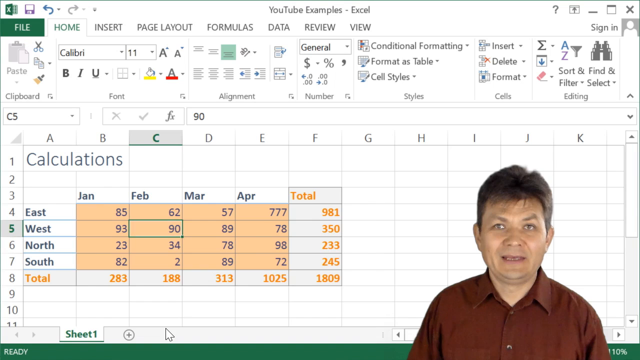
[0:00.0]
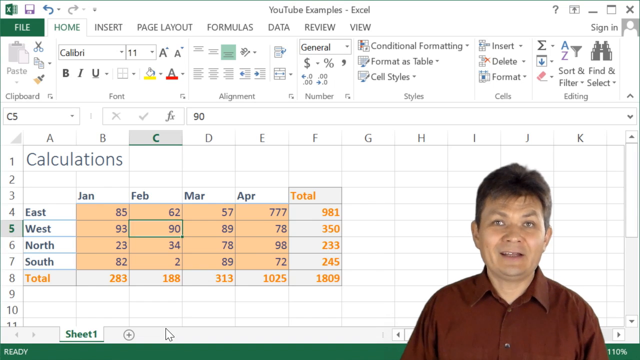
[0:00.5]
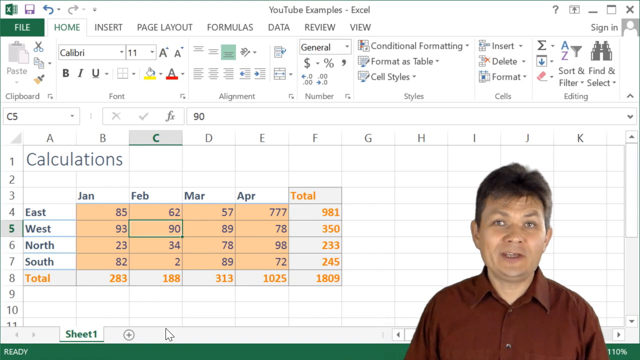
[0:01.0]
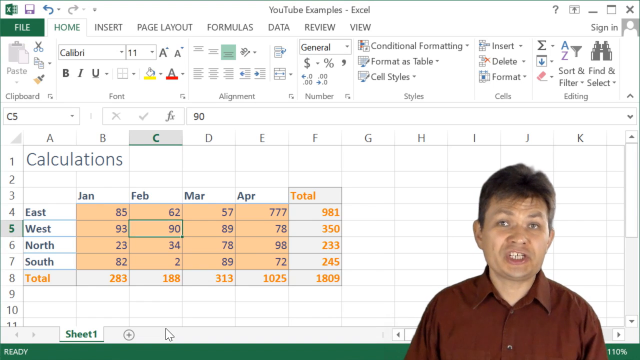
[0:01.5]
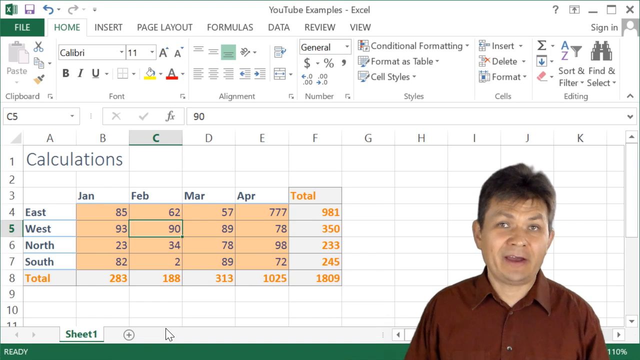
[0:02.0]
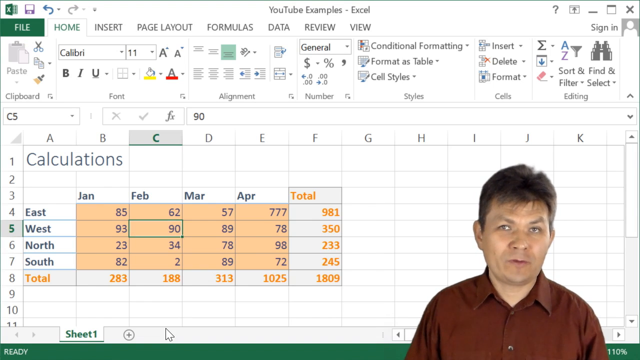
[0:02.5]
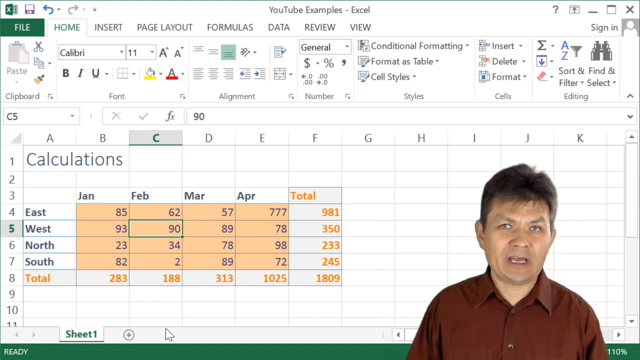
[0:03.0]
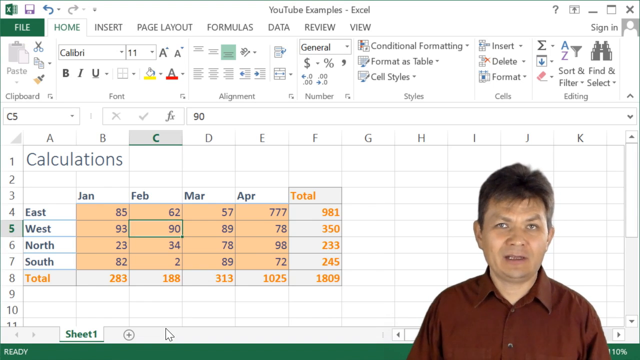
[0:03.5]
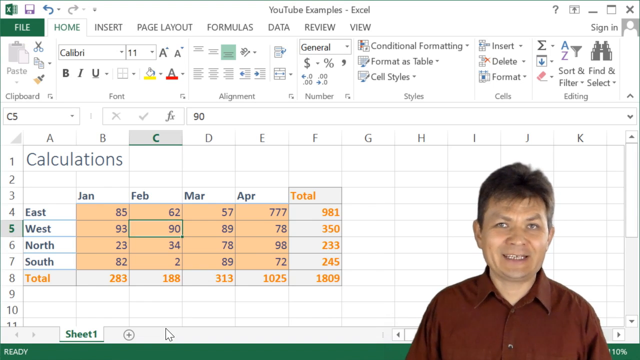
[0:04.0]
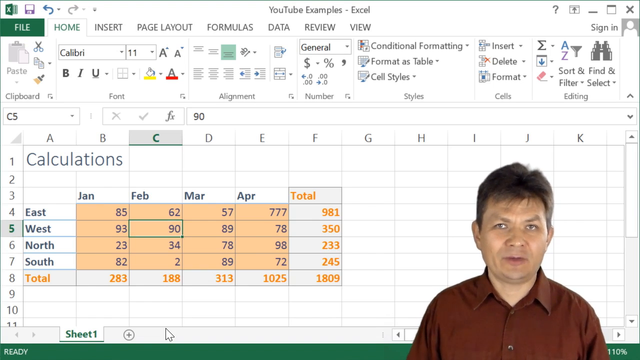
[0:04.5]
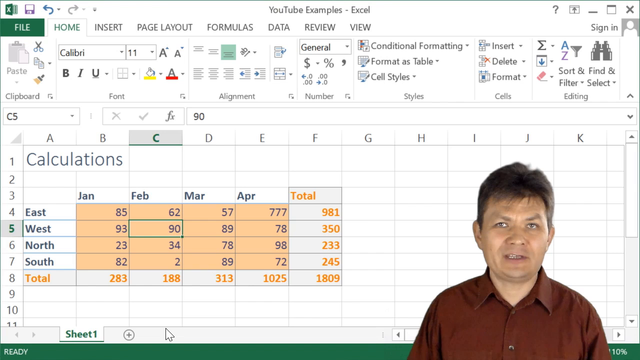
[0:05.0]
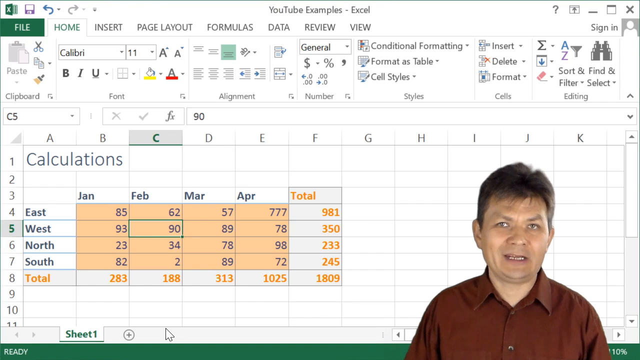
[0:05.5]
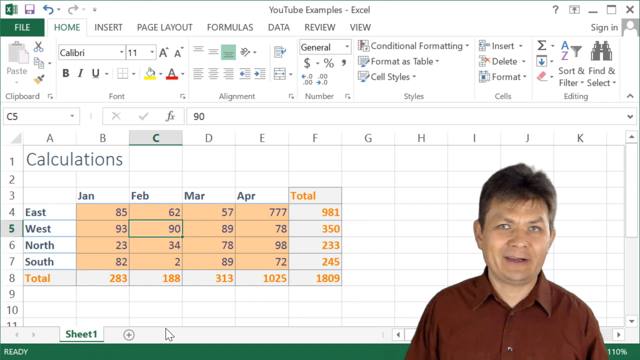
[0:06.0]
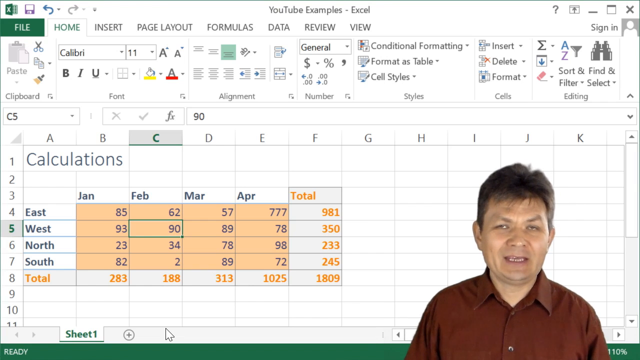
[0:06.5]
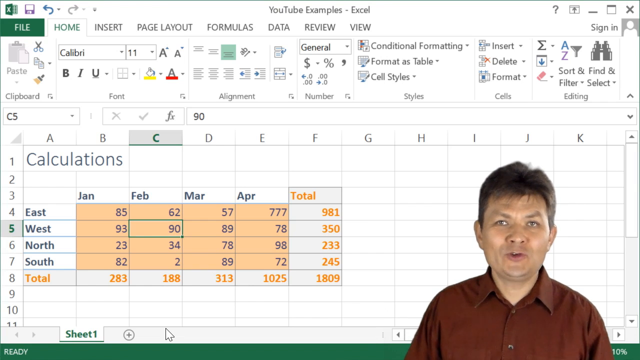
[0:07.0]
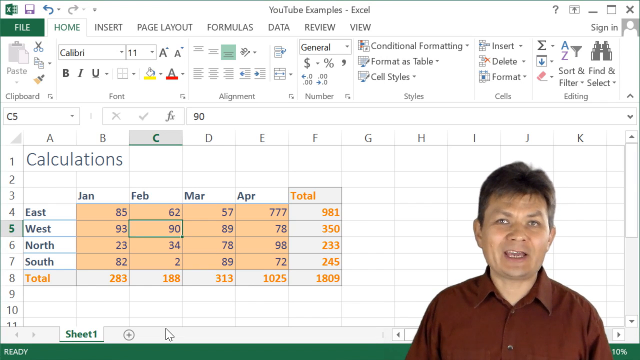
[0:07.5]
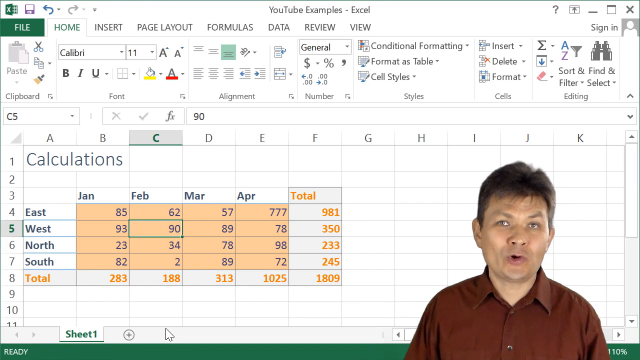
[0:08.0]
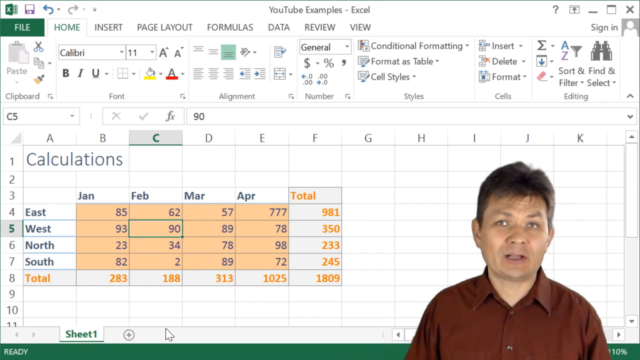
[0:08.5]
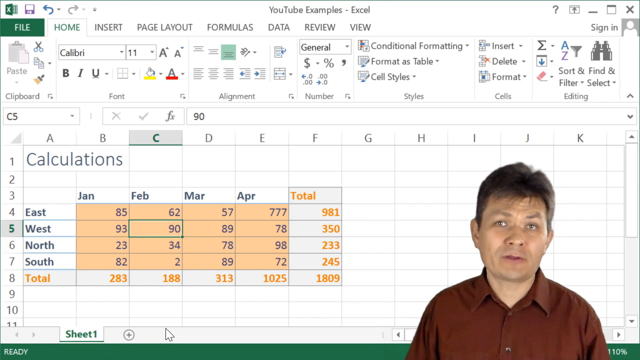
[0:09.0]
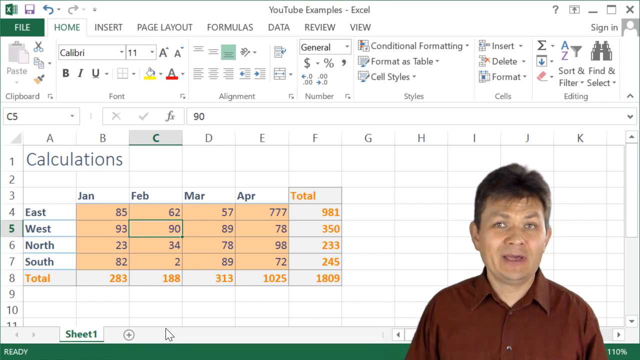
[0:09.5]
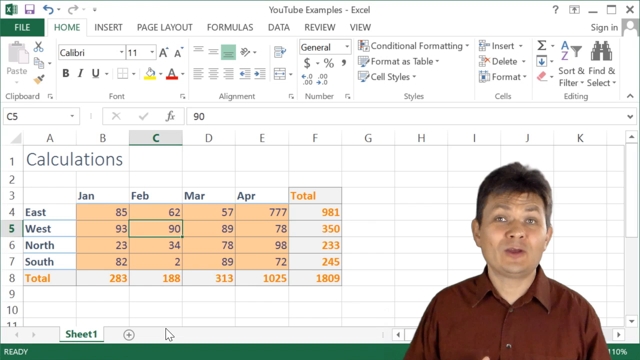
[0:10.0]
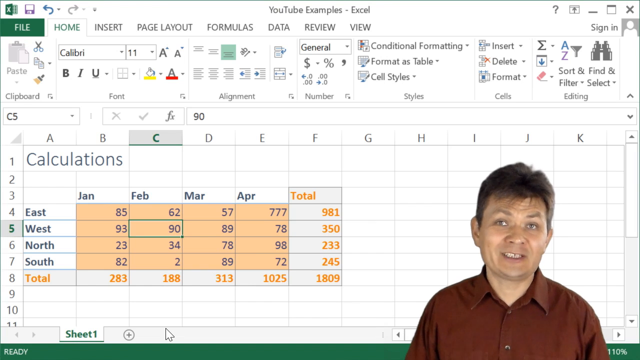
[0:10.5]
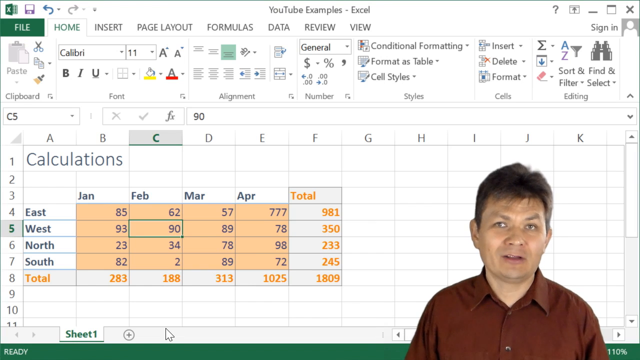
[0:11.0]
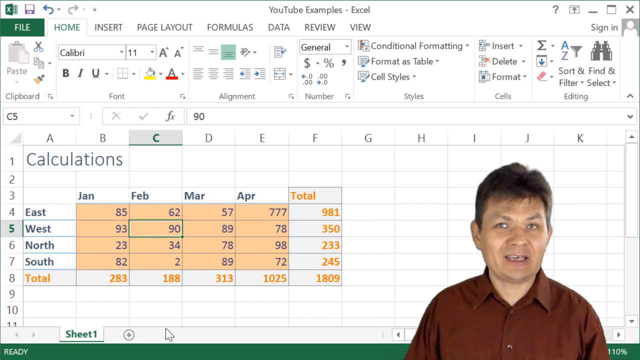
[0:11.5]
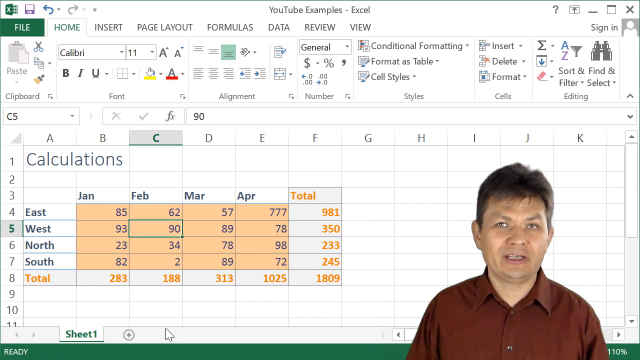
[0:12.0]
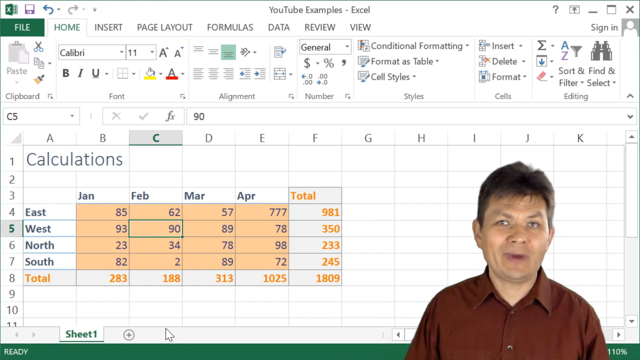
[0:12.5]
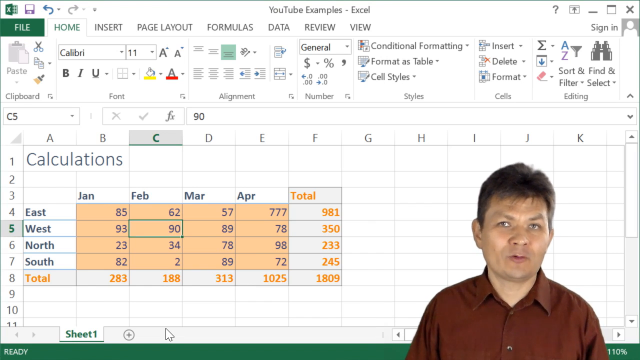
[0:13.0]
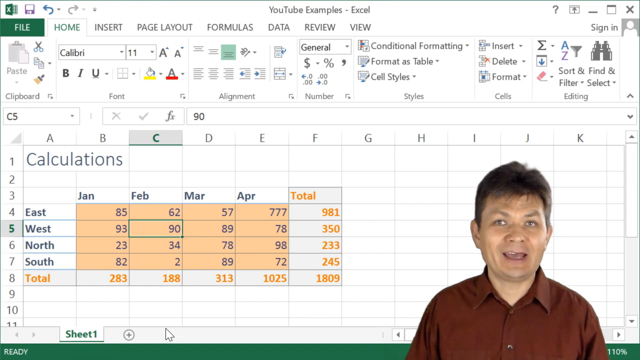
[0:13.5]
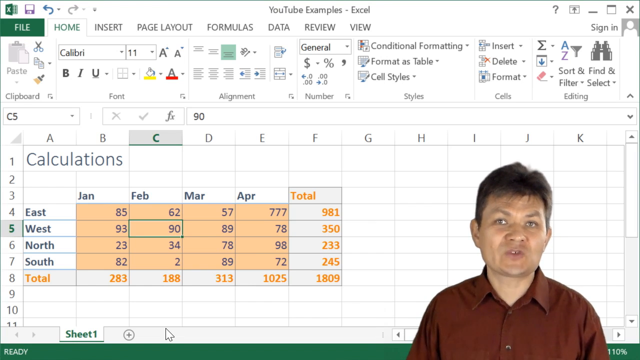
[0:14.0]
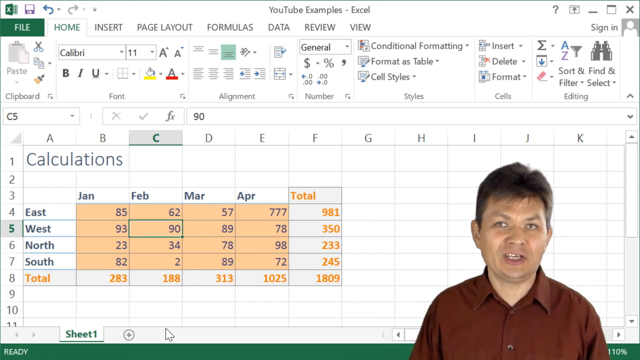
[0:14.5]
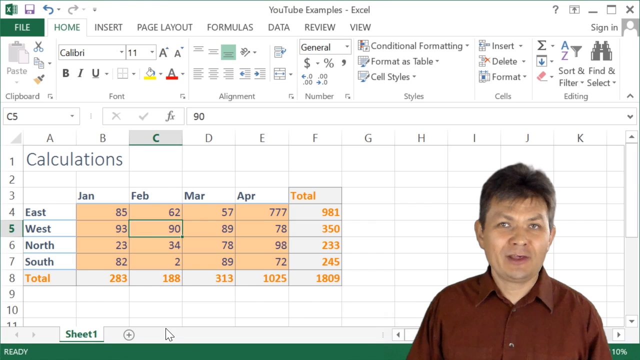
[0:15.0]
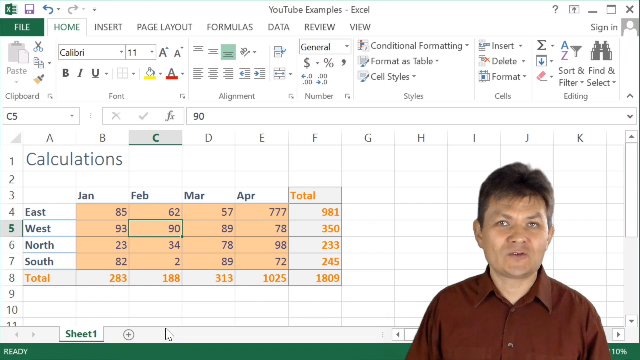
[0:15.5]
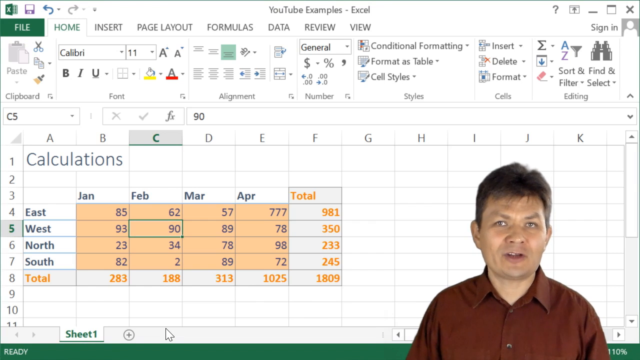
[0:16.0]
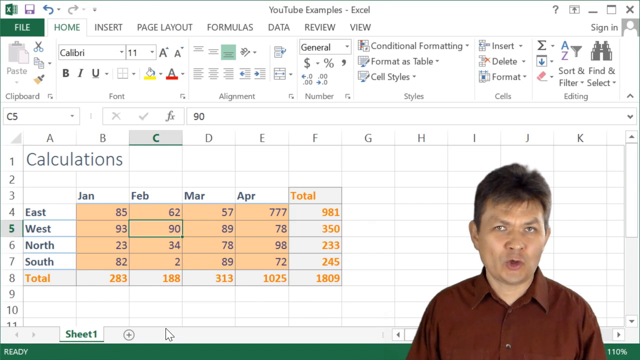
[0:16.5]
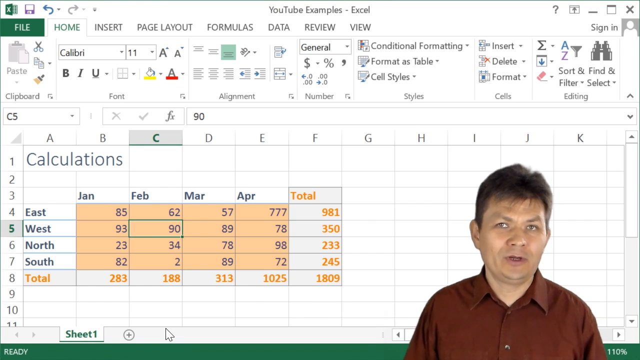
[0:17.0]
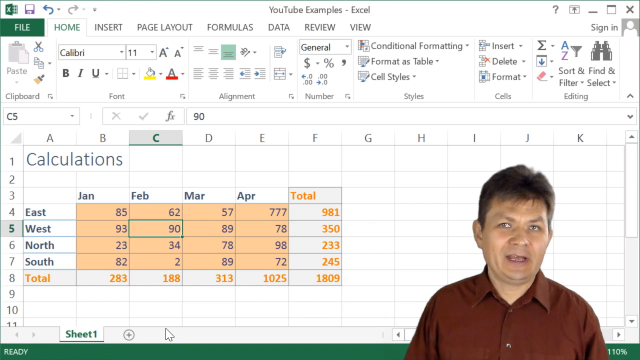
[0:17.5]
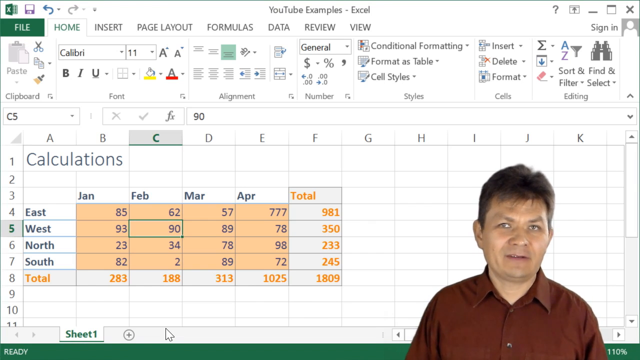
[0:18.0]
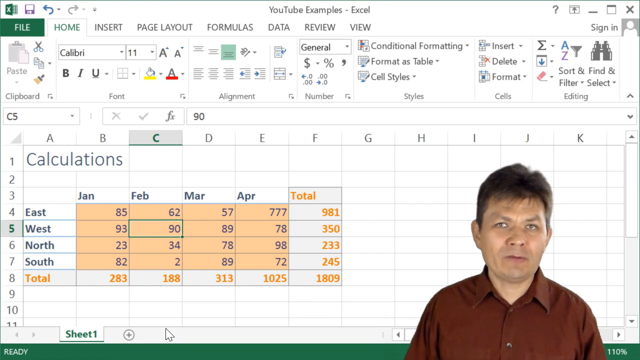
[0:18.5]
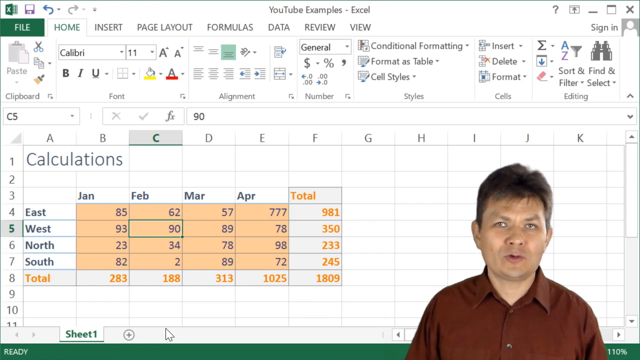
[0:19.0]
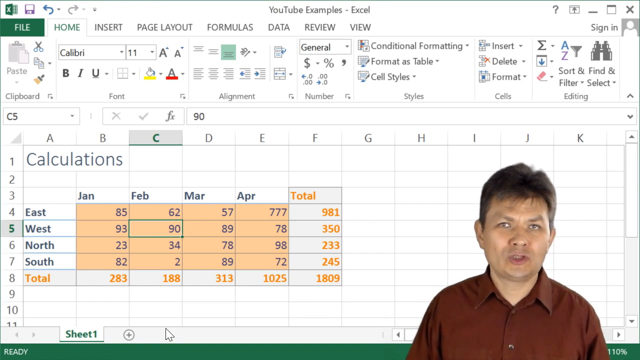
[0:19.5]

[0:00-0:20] The video is about Microsoft Excel.